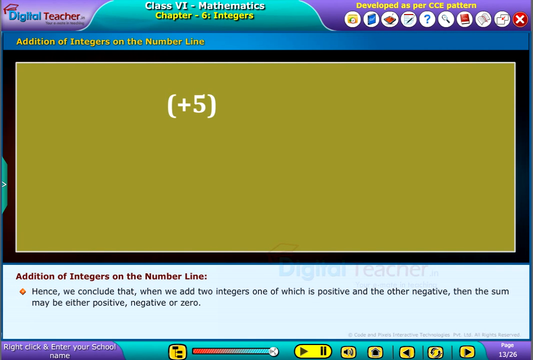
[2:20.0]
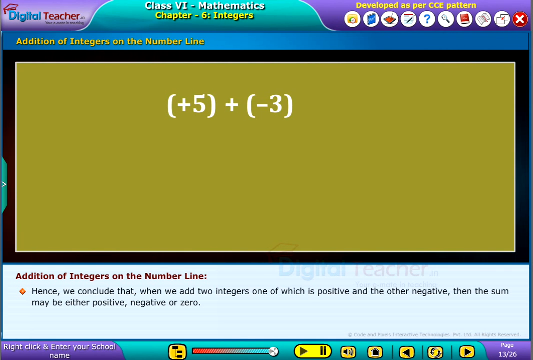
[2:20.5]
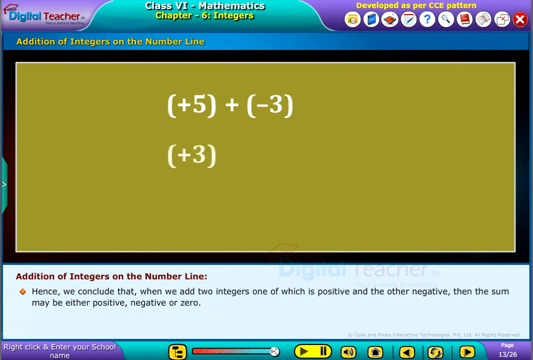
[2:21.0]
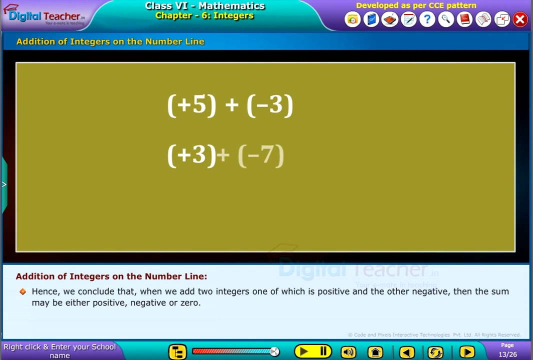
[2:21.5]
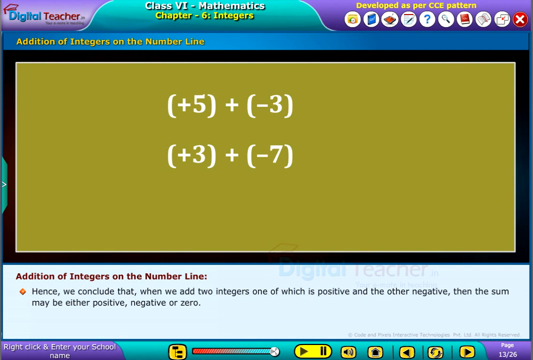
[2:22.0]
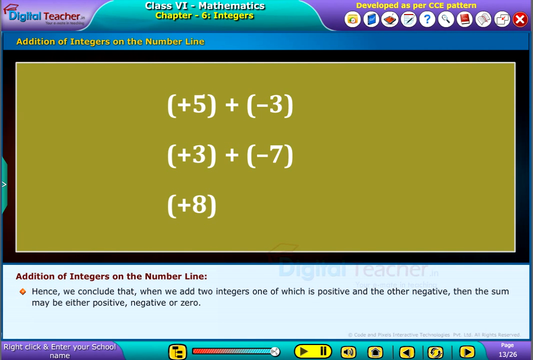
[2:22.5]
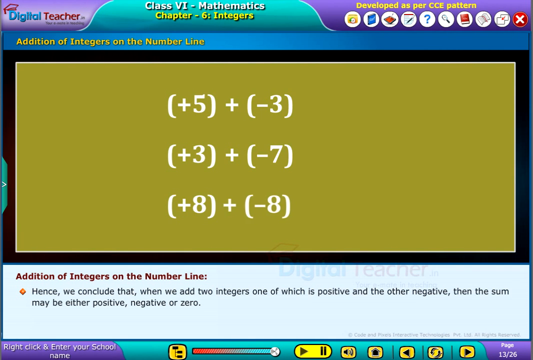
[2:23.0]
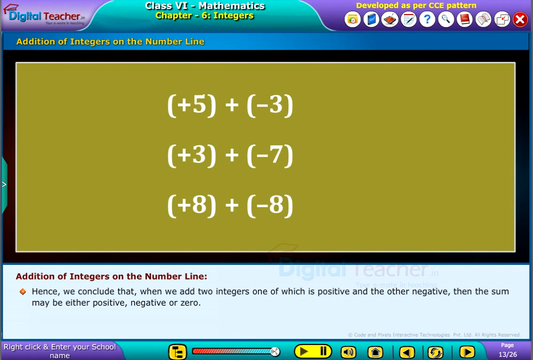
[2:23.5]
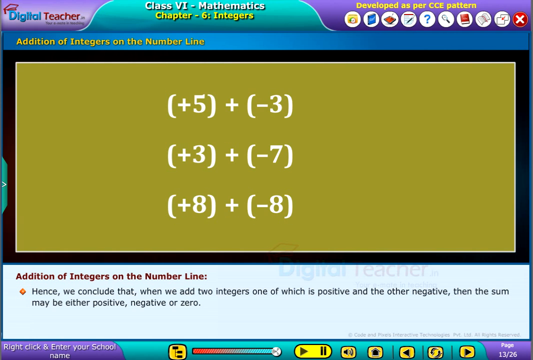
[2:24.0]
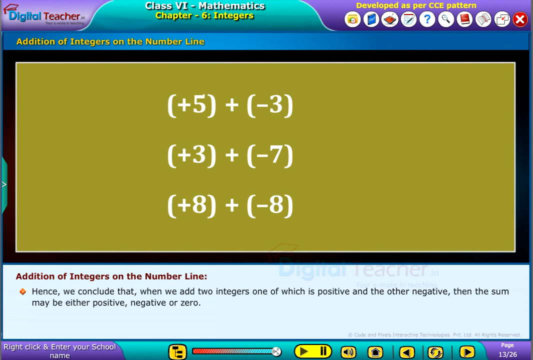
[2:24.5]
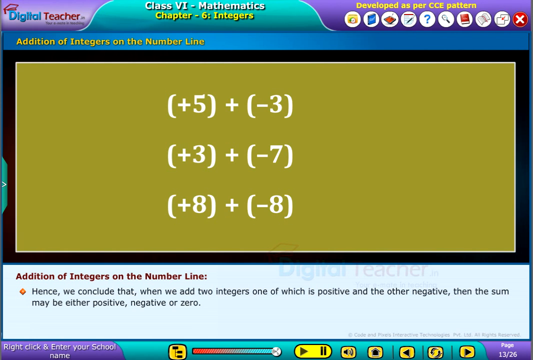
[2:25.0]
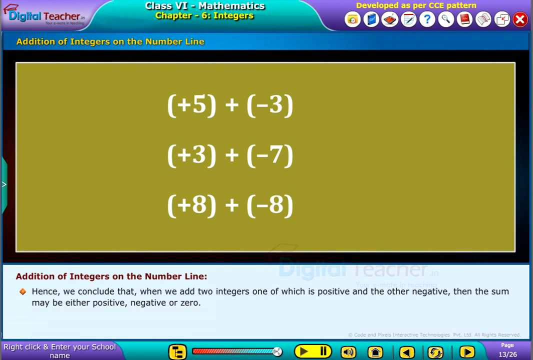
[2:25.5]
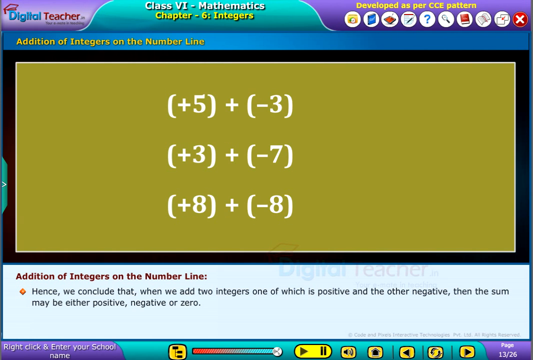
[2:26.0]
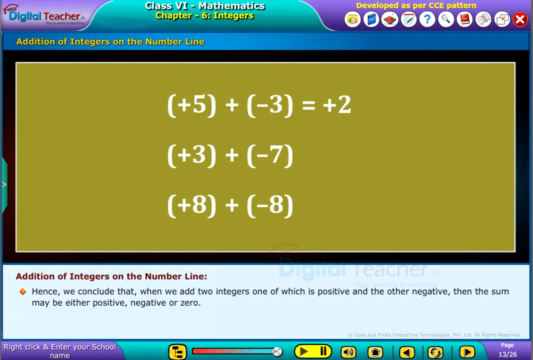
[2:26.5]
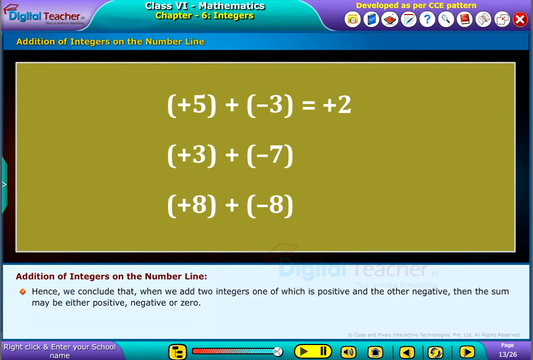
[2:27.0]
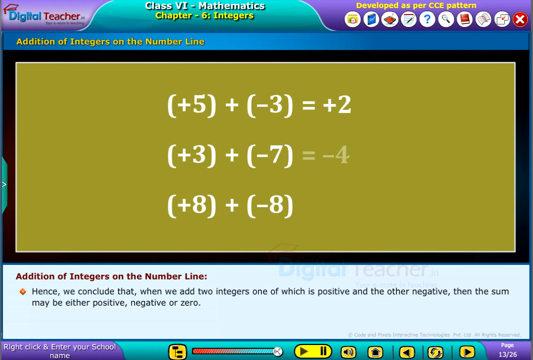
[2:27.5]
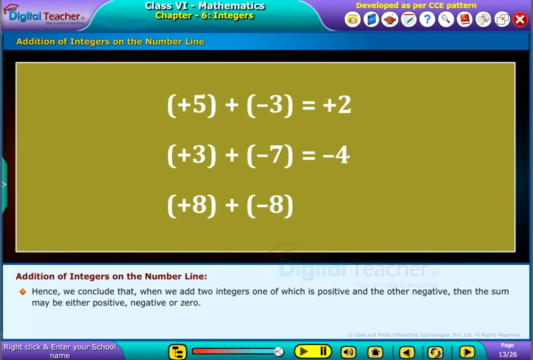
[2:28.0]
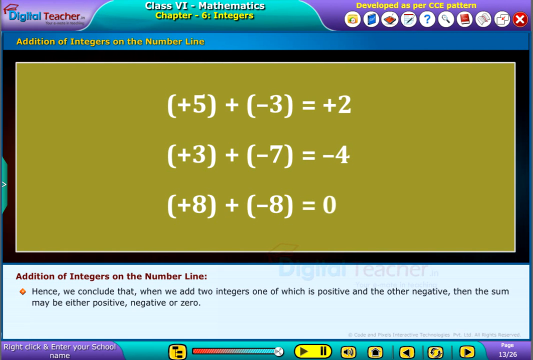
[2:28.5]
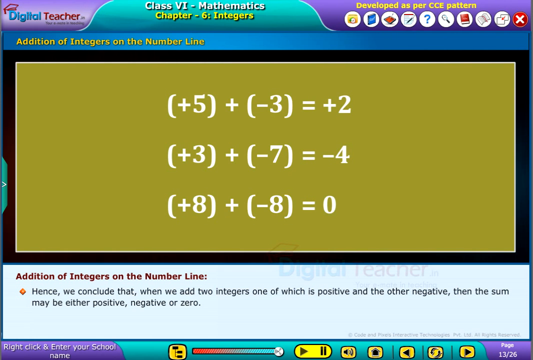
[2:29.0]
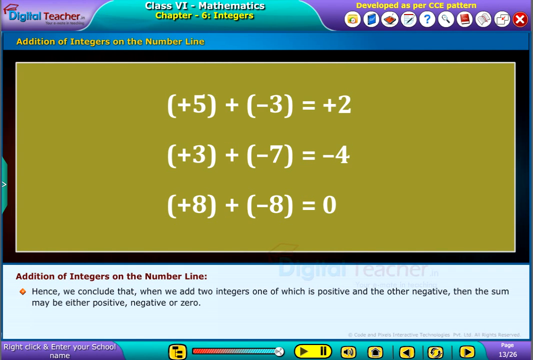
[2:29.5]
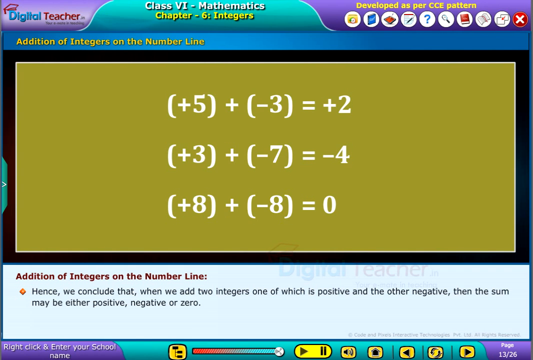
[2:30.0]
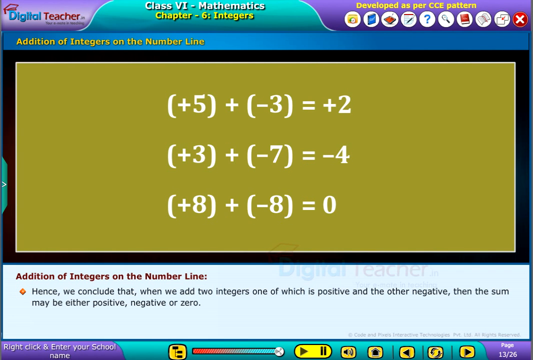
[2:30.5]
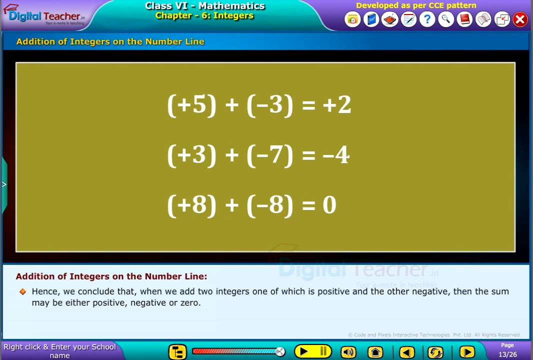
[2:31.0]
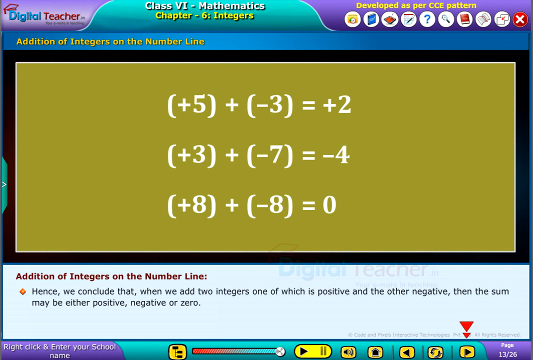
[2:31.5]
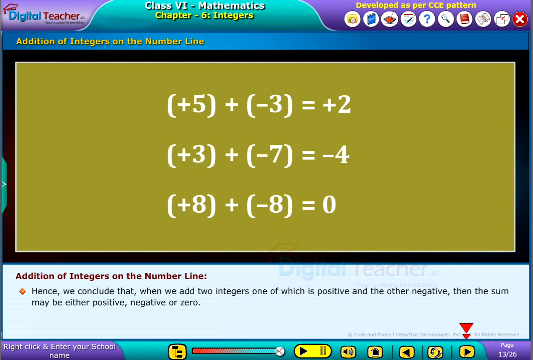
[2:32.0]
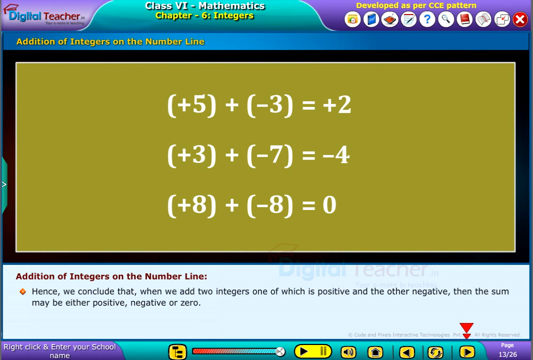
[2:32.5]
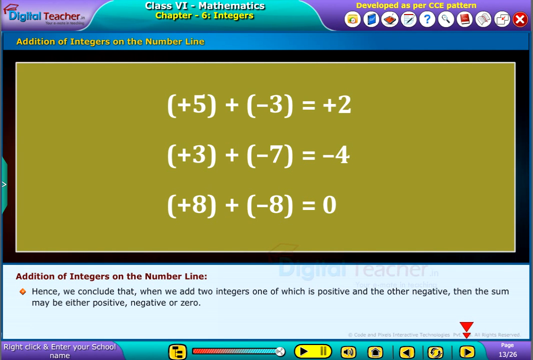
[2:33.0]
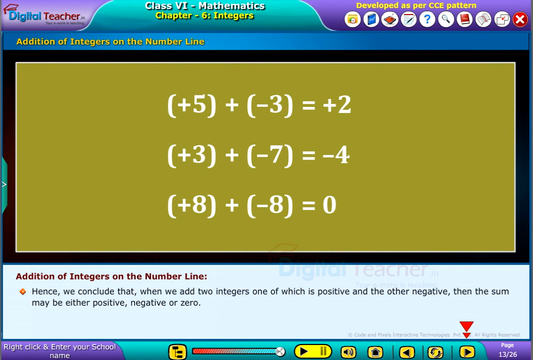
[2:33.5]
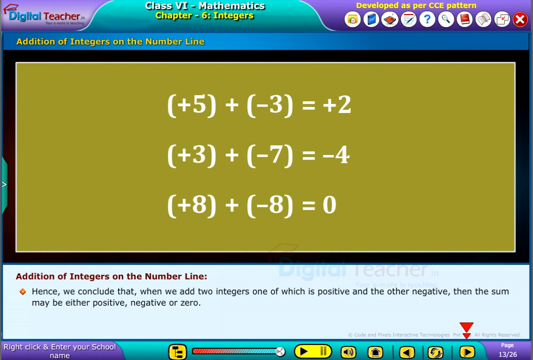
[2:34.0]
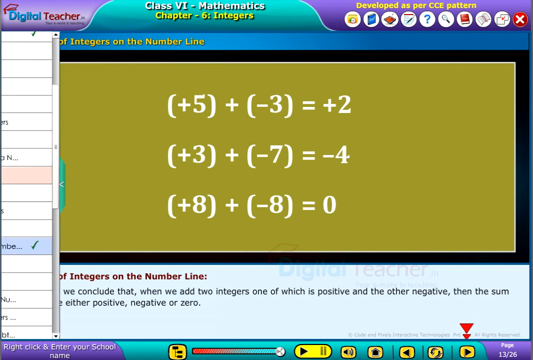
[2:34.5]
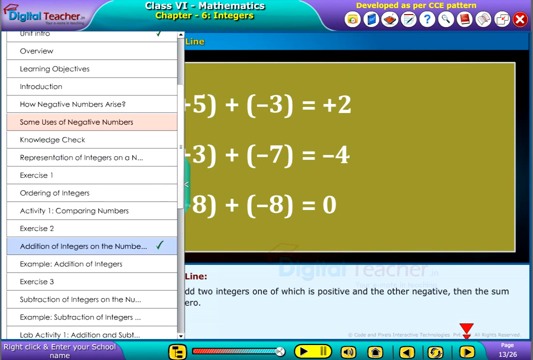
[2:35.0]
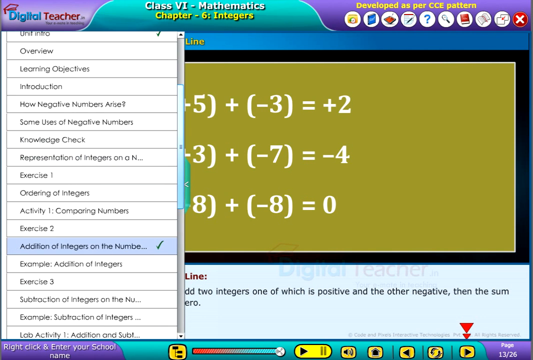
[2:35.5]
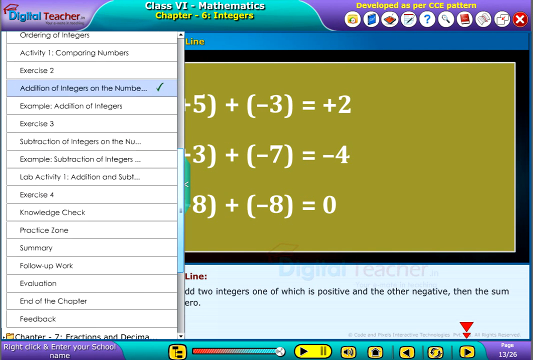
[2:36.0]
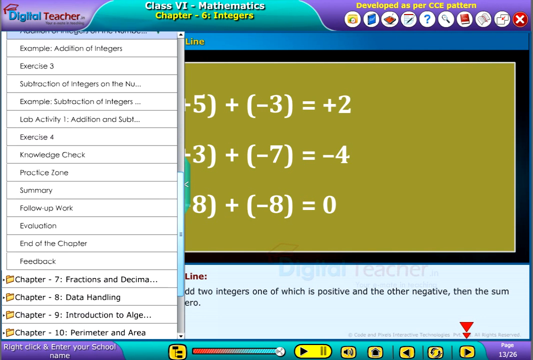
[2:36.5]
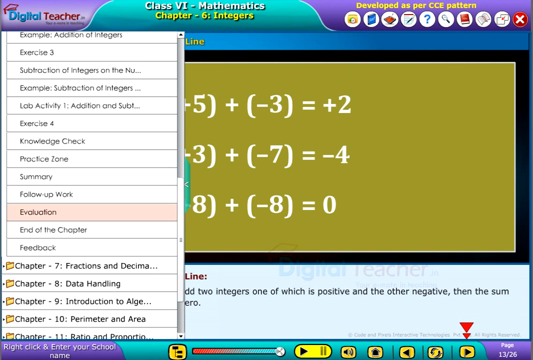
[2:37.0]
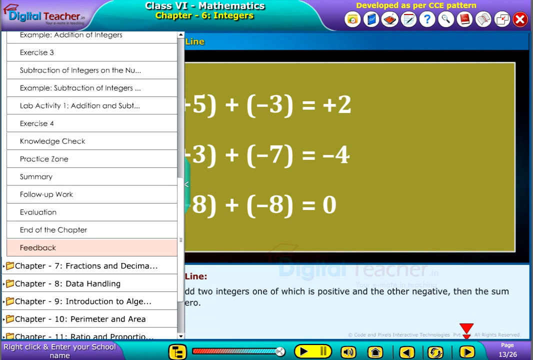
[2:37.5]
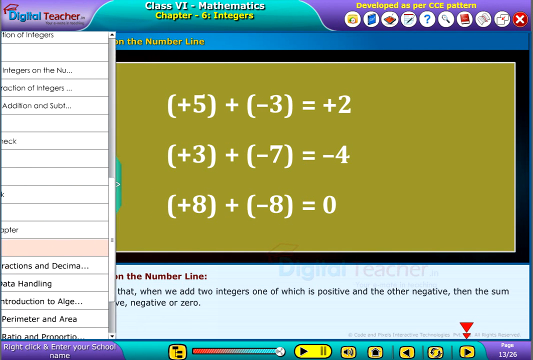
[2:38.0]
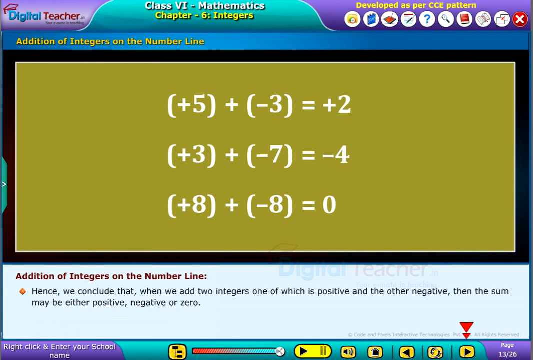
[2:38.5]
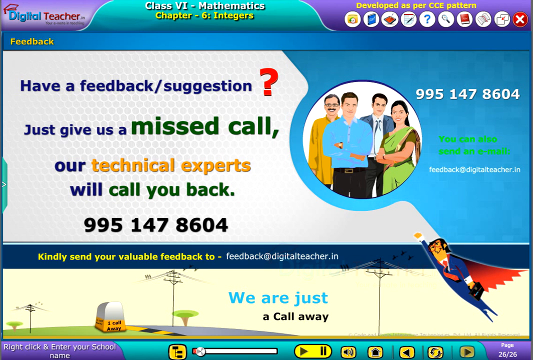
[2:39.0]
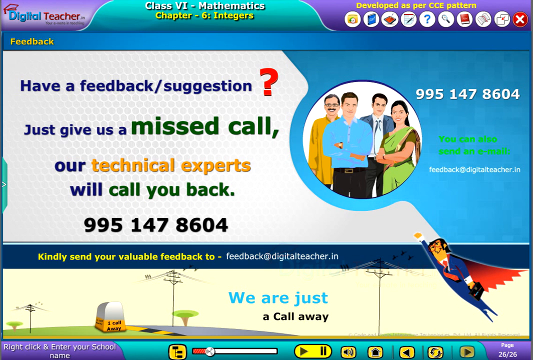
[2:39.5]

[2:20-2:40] The yellow box is populated with white text and numbers. The first line says "(positive 5) plus (negative 3)", the second "(plus 3) plus (negative 7)", and the third "(positive 8) plus (negative 8)". The first line equals positive 2, the second equals negative 4 and the third equals 0. Two red arrows then appear at the bottom right, and the left navigation bar pops up again. The content list is scrolled to the bottom of chapter 6, where the last selectable unit is "feedback", and it is clicked.